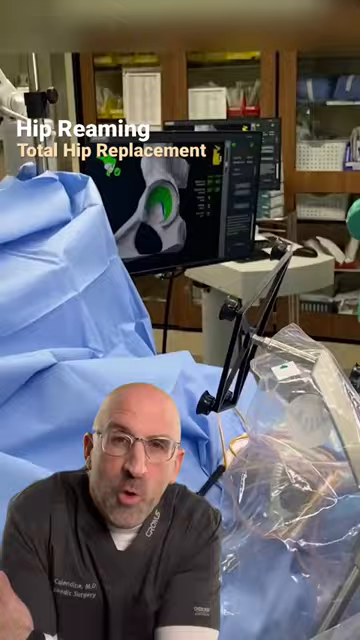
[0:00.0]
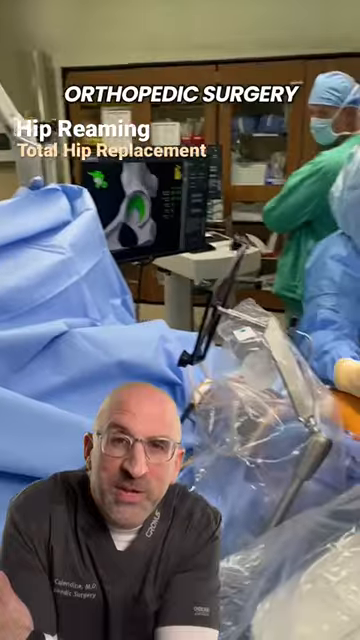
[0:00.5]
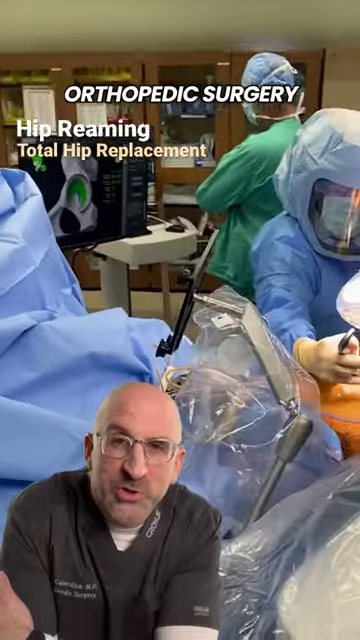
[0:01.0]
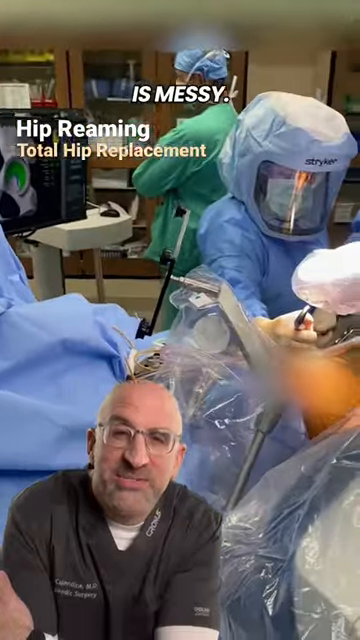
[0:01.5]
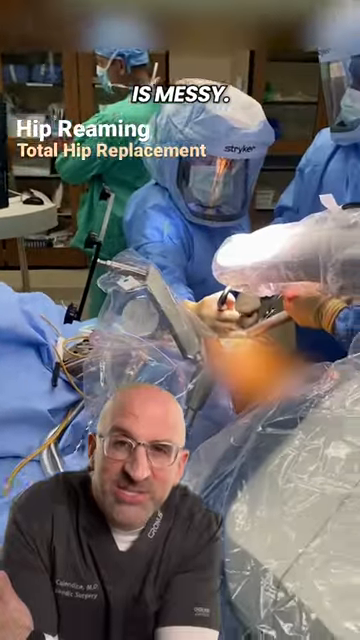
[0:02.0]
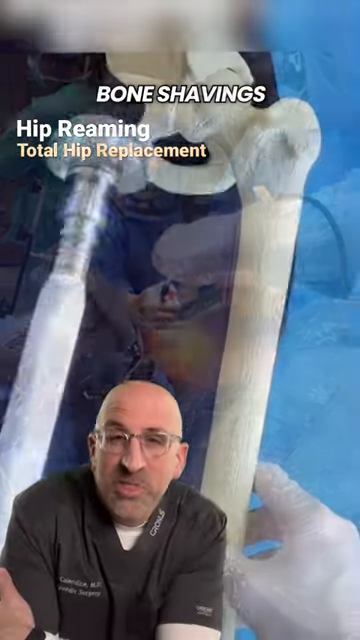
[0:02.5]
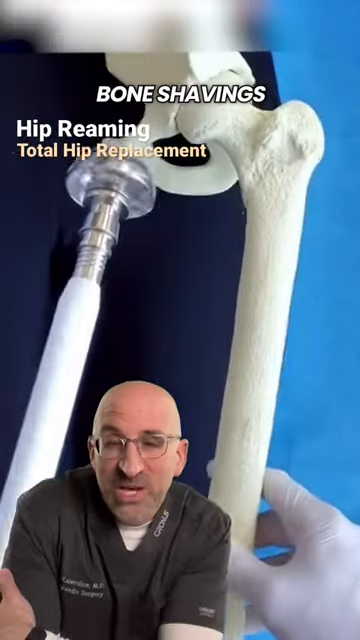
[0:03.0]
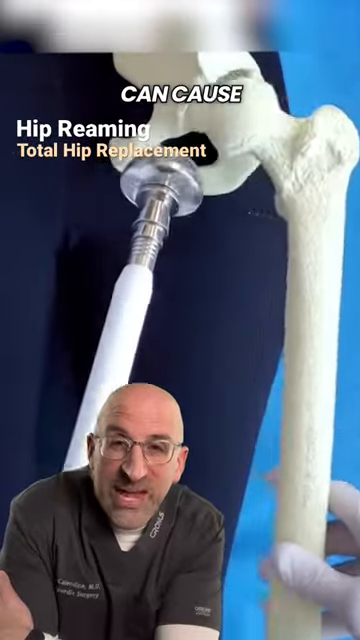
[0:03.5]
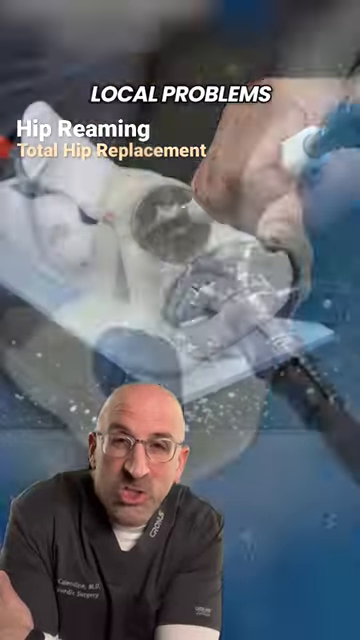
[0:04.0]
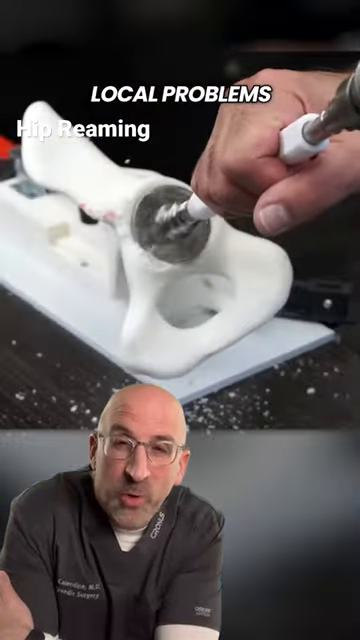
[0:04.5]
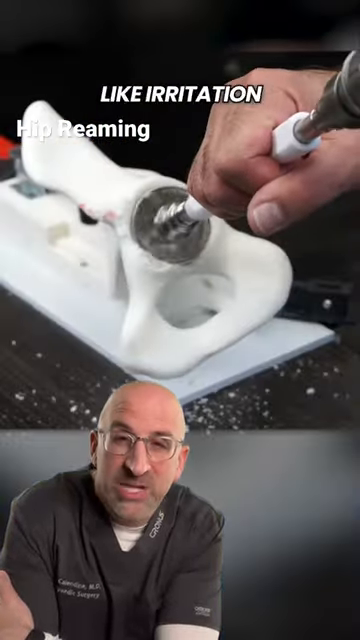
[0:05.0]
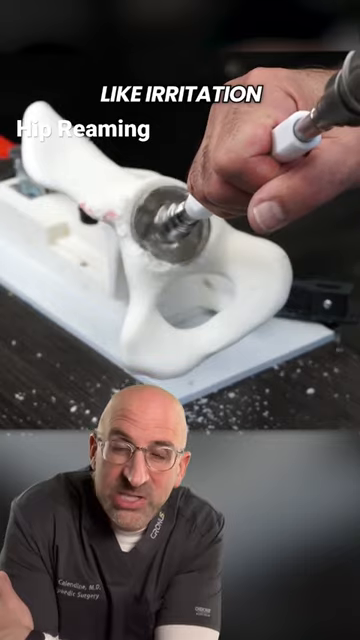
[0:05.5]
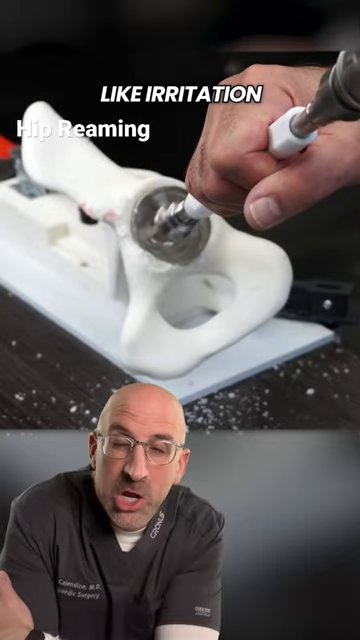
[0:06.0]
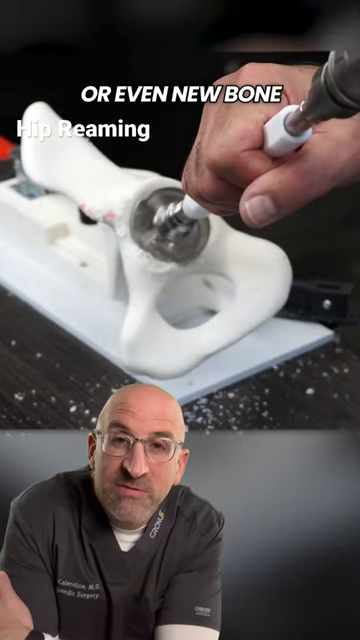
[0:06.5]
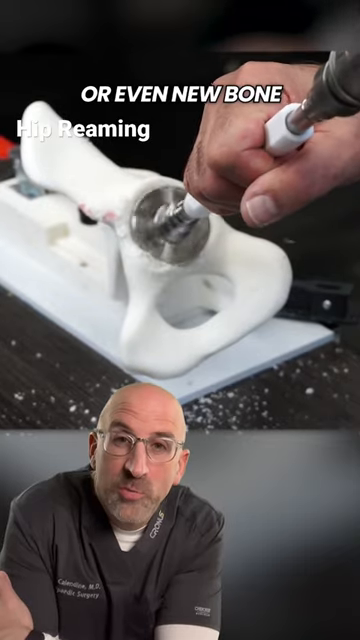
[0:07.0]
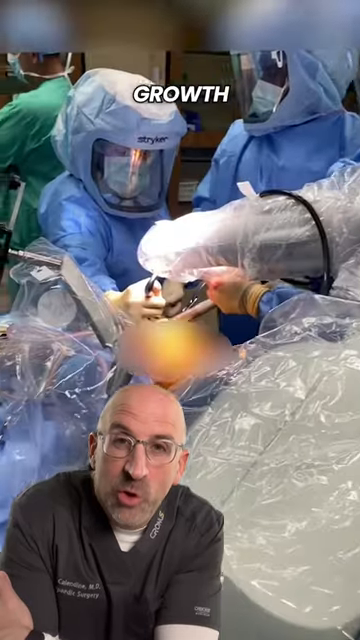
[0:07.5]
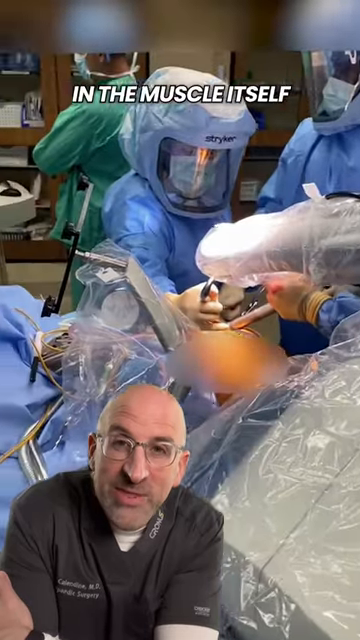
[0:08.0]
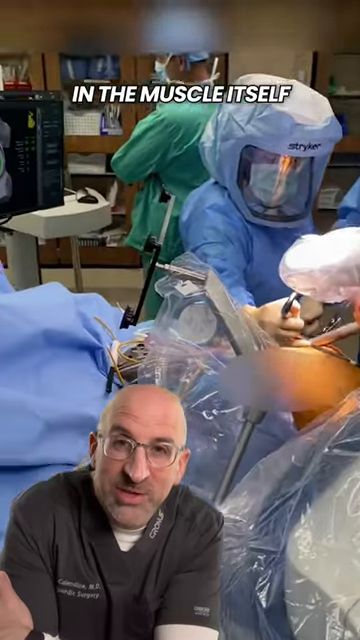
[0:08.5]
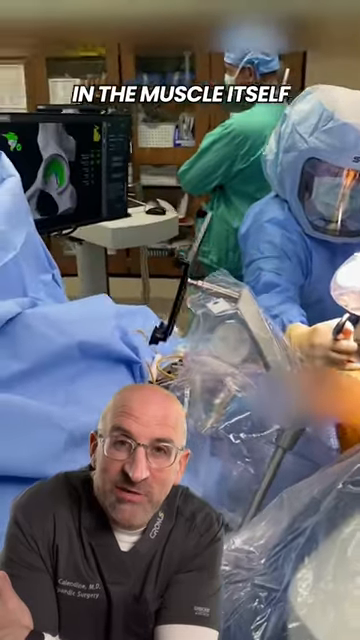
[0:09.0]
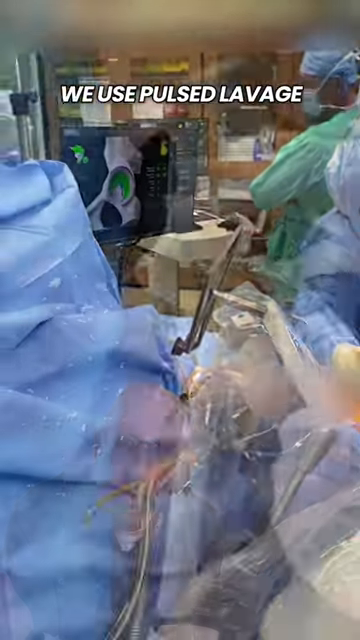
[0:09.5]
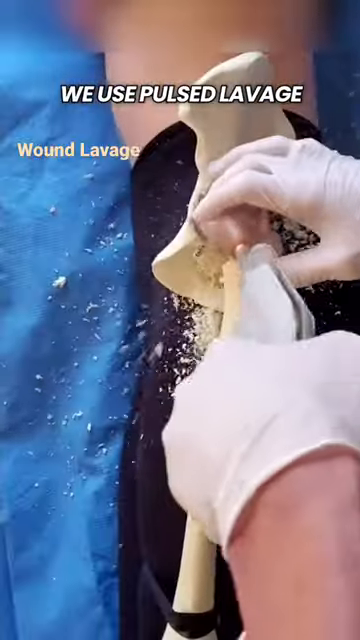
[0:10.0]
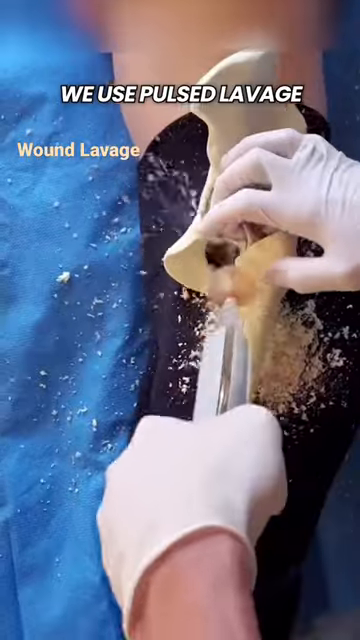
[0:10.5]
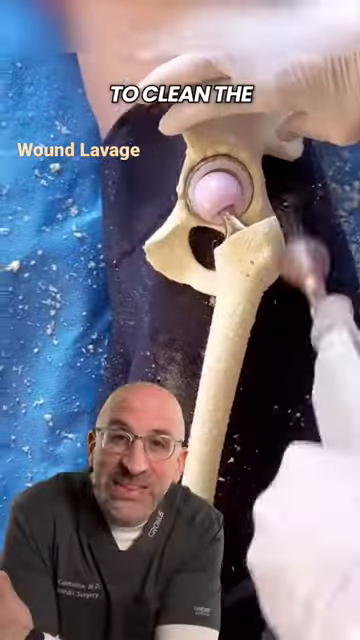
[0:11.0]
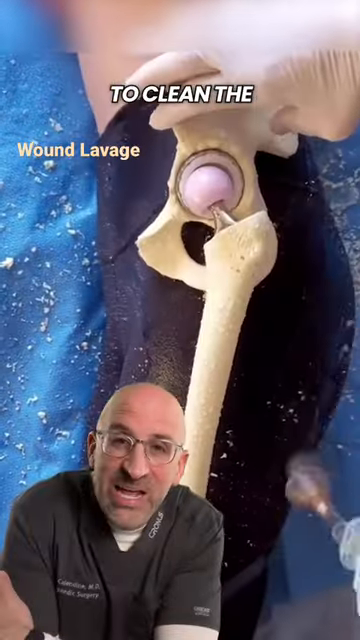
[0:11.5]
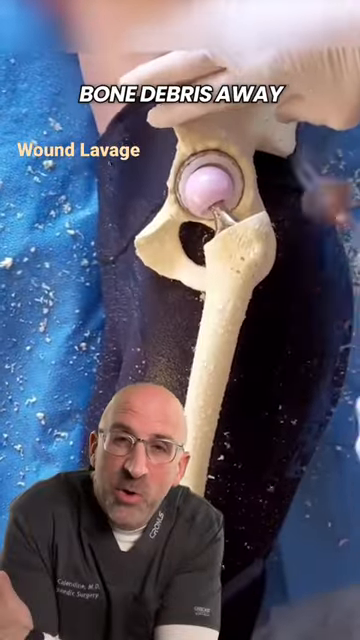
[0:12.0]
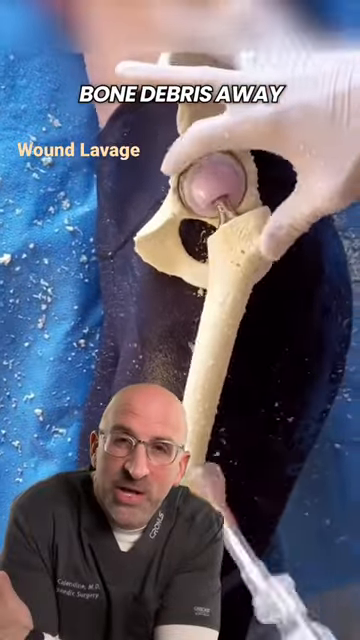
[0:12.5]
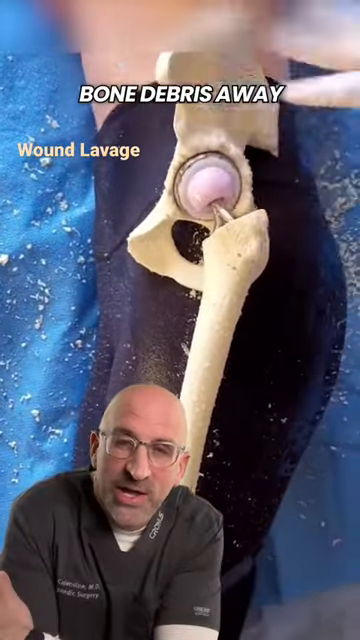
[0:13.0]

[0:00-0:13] The video opens with white text on the screen that reads "hip reaming, total hip replacement." It is a video of a surgical procedure with a man overlaid on top; he wears medical scrubs with embroidery on the front, as though his name is on it. The view then pans, revealing a procedure being performed. It then cuts to an example of a bone and an instrument used during the procedure, followed by the tools going into a sample bone, which is held up to a person as an example. Text phases in on the screen reading "orthopedic surgery is messy, bone shavings can cause local problems like irritation or even new bone growth in the muscle itself." The text "We use pulsed lavage to clean the bone debris away" then goes by.